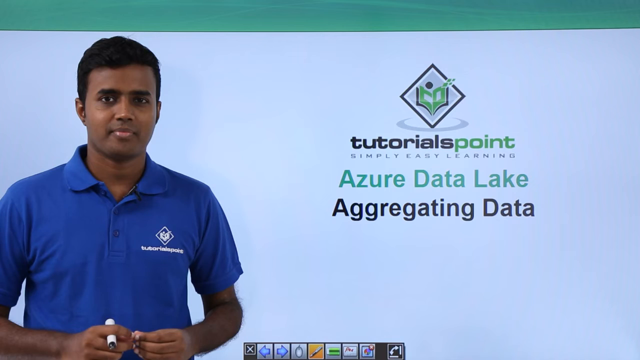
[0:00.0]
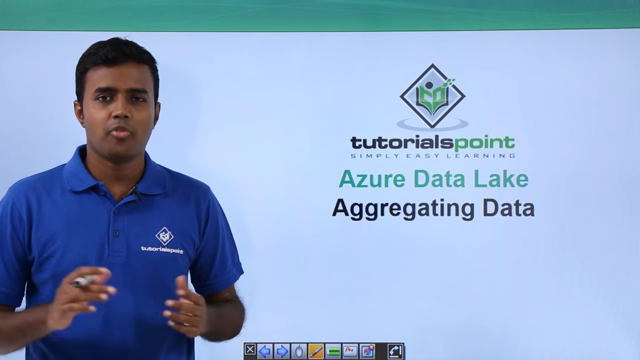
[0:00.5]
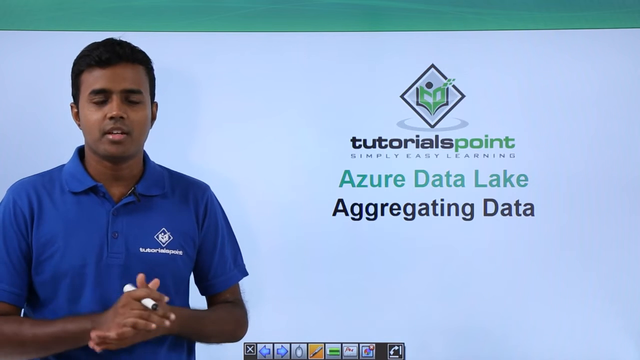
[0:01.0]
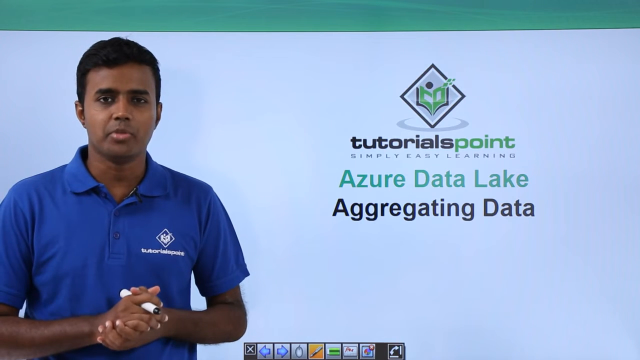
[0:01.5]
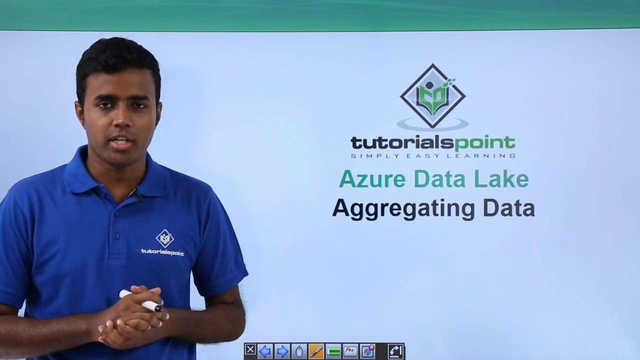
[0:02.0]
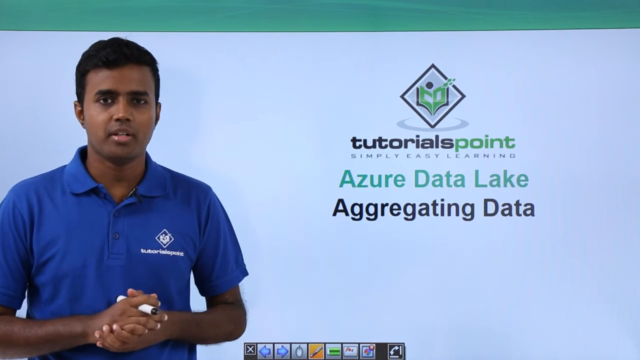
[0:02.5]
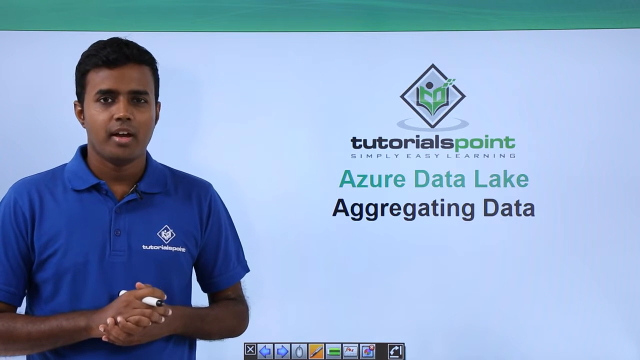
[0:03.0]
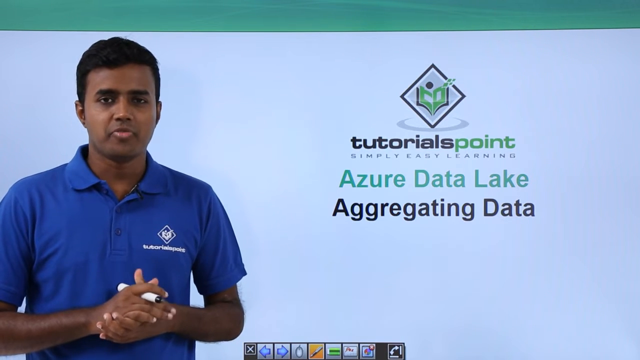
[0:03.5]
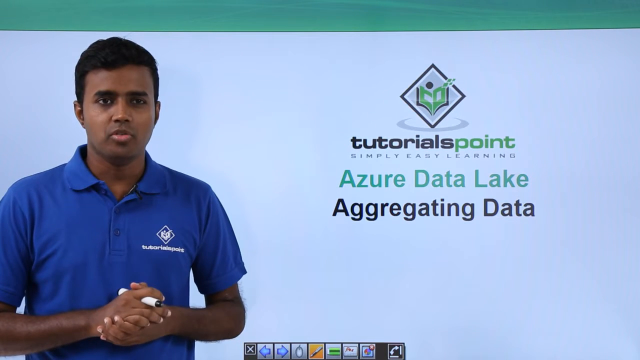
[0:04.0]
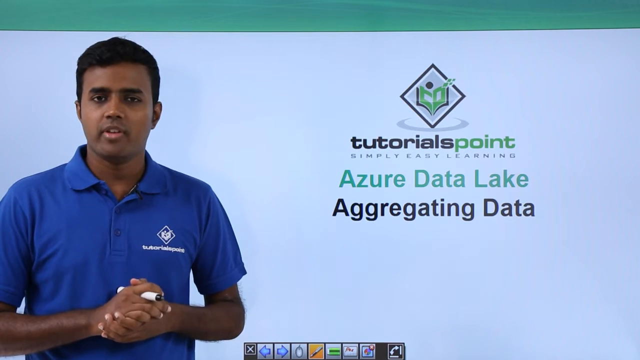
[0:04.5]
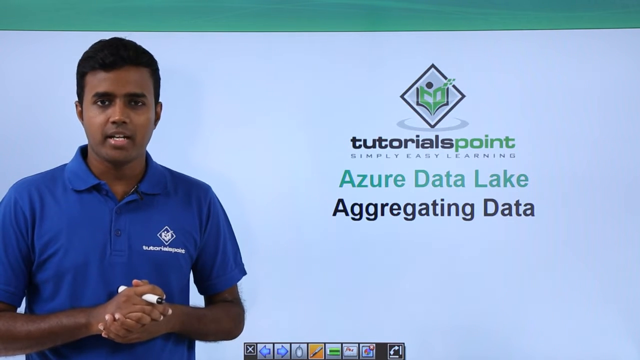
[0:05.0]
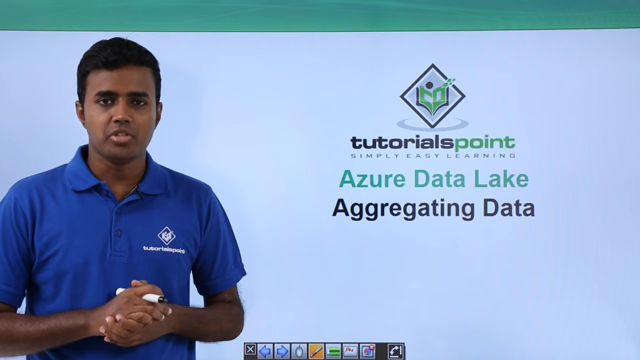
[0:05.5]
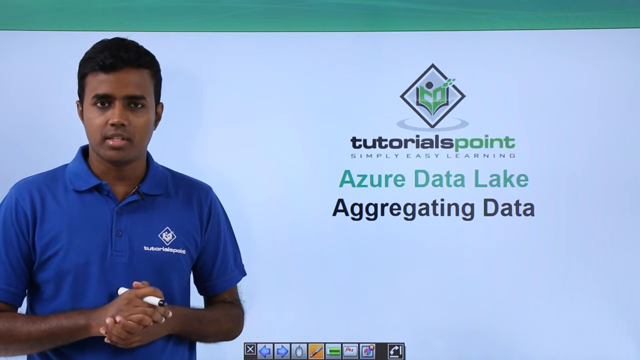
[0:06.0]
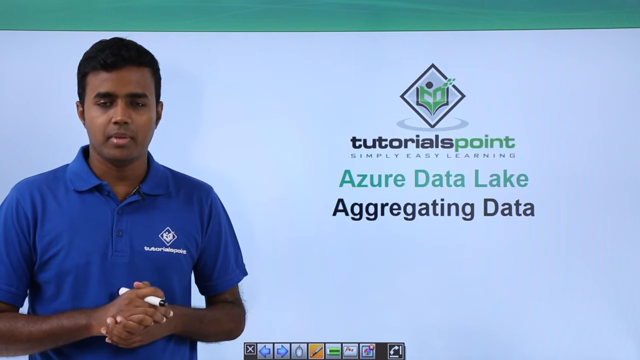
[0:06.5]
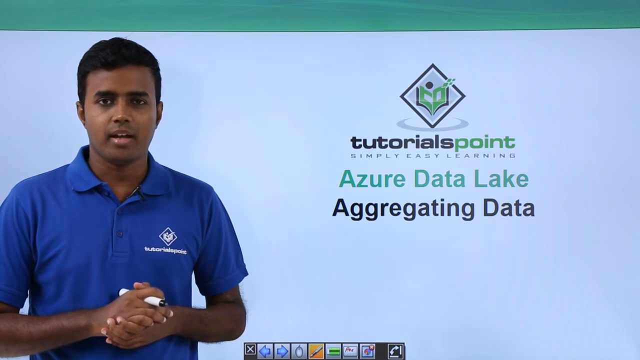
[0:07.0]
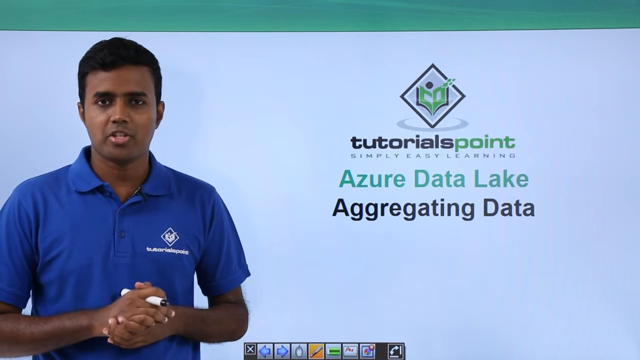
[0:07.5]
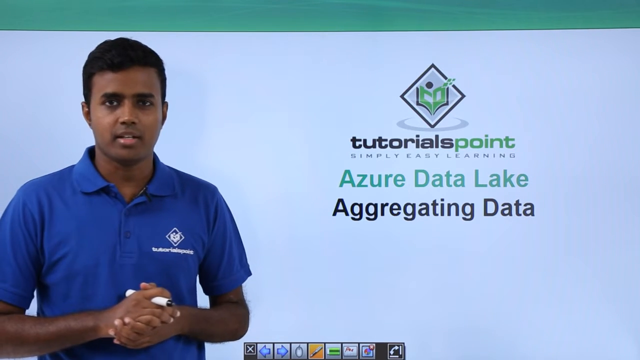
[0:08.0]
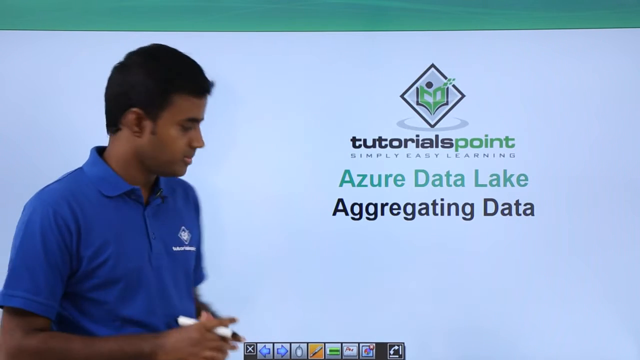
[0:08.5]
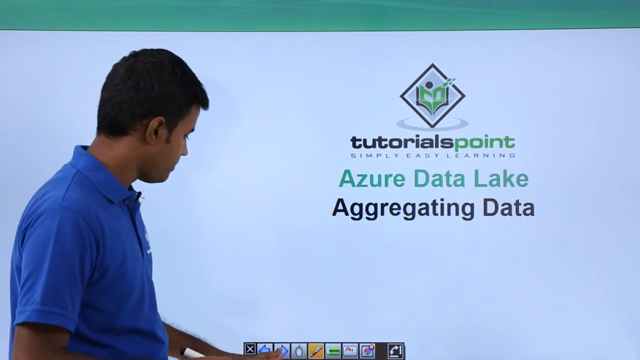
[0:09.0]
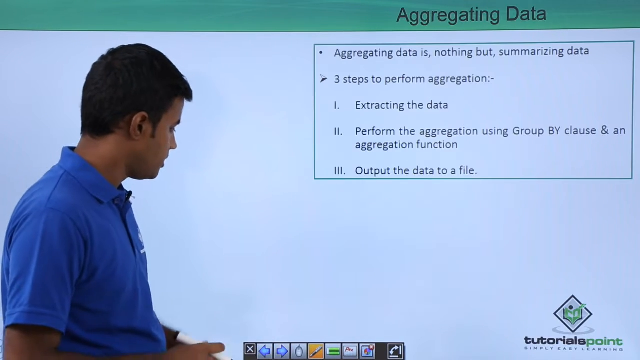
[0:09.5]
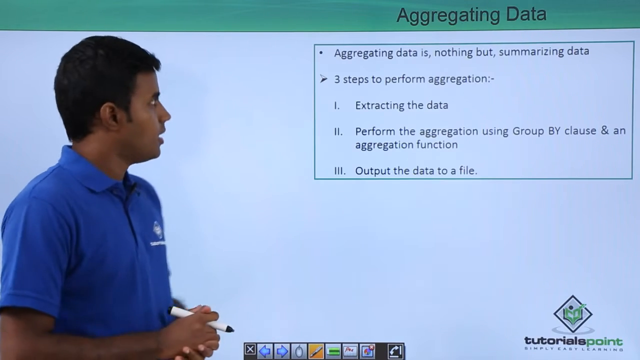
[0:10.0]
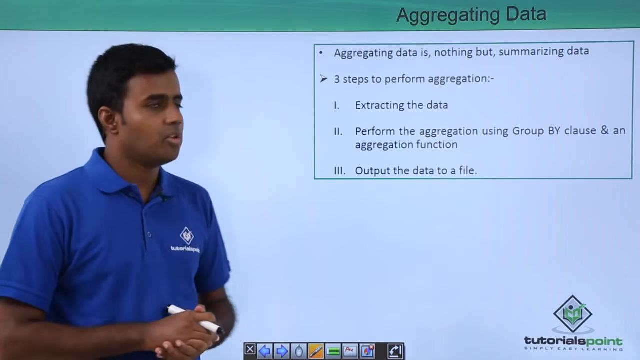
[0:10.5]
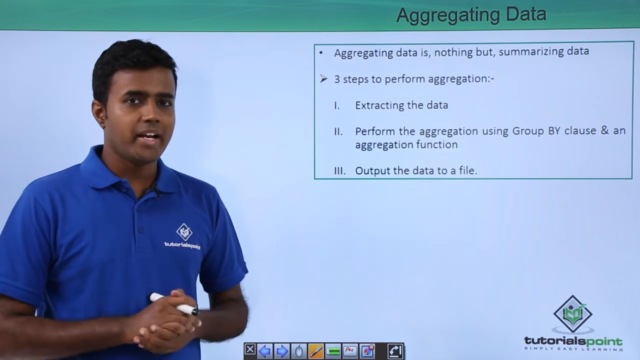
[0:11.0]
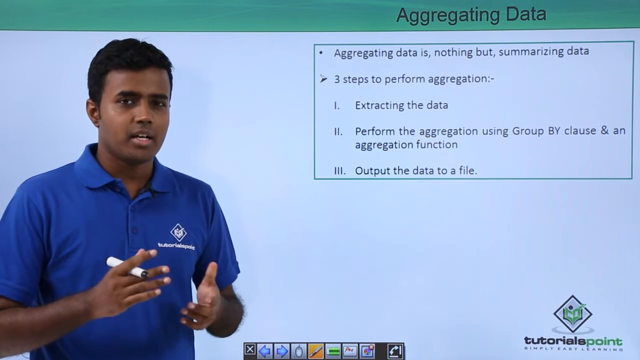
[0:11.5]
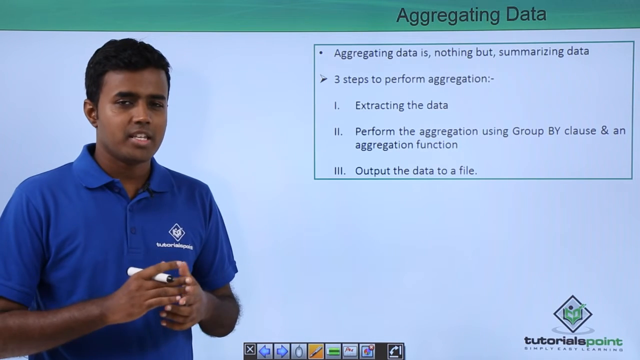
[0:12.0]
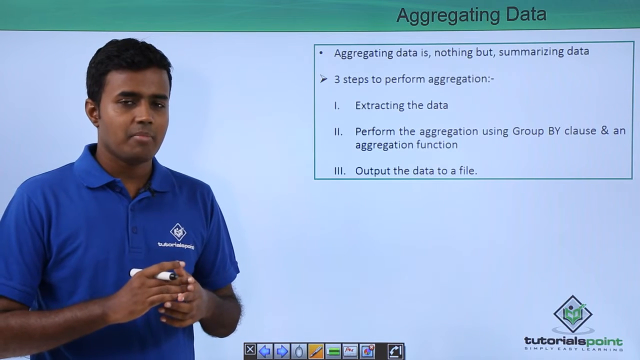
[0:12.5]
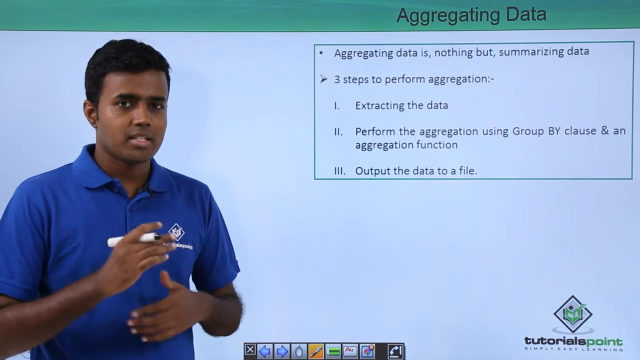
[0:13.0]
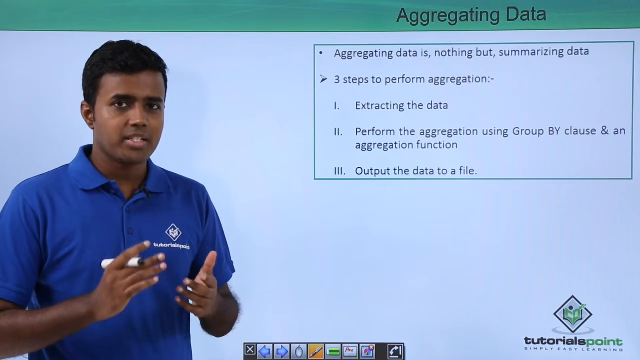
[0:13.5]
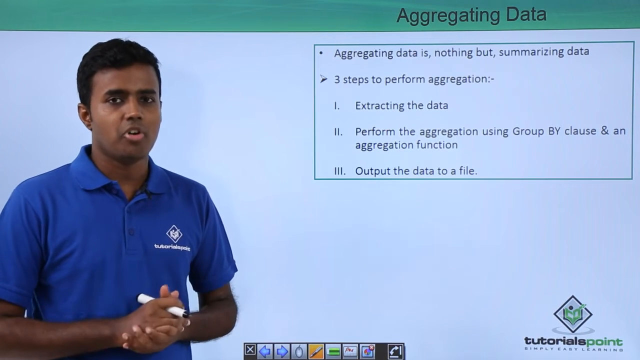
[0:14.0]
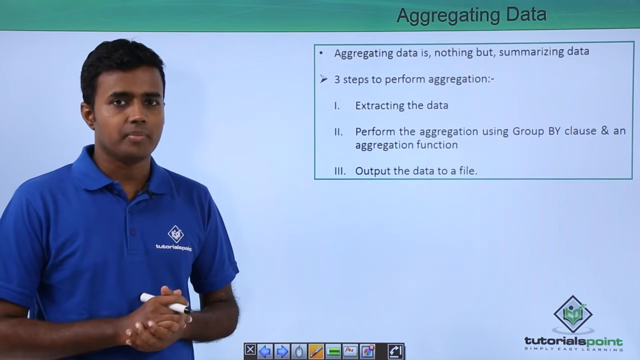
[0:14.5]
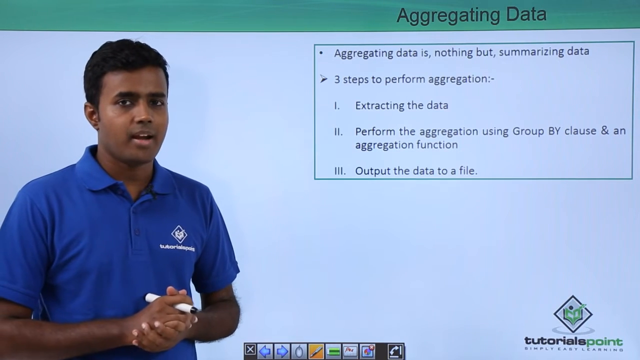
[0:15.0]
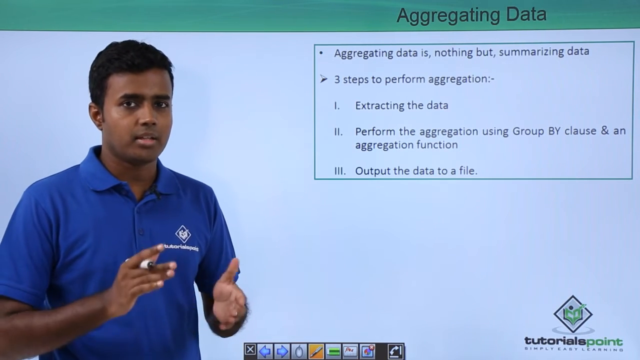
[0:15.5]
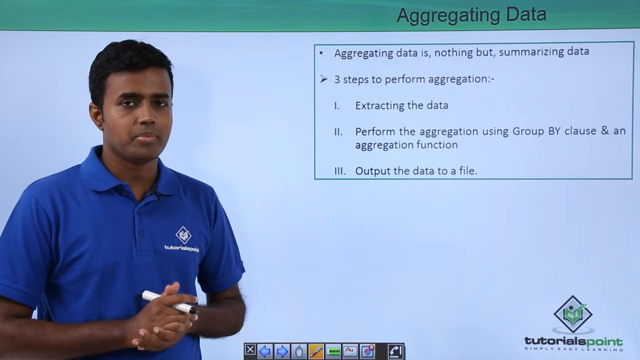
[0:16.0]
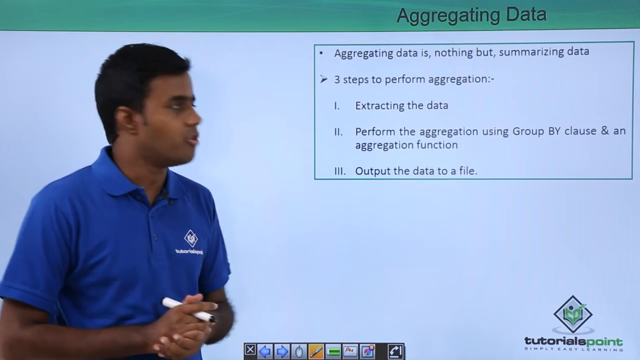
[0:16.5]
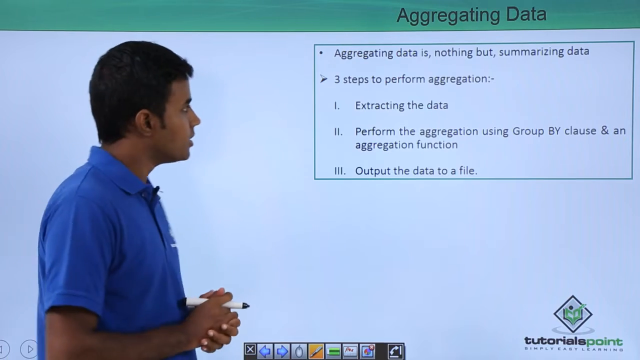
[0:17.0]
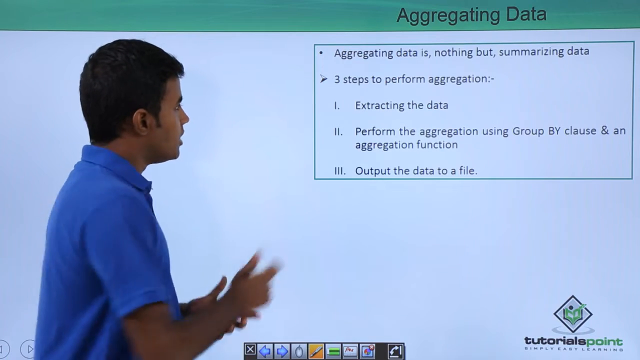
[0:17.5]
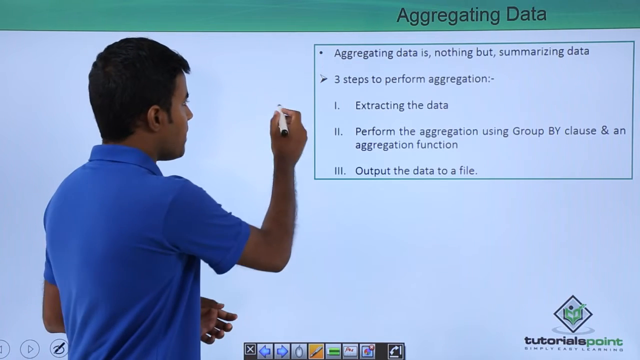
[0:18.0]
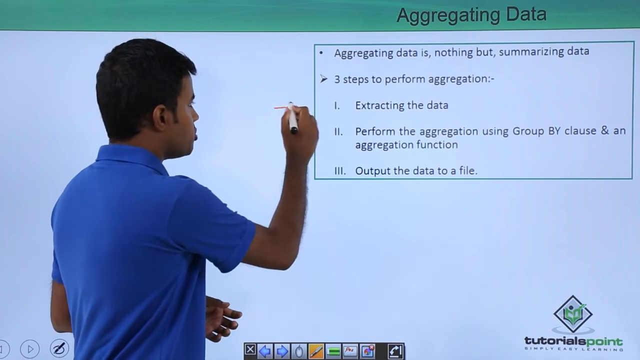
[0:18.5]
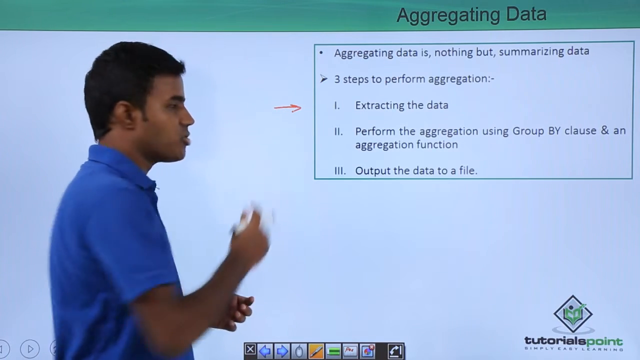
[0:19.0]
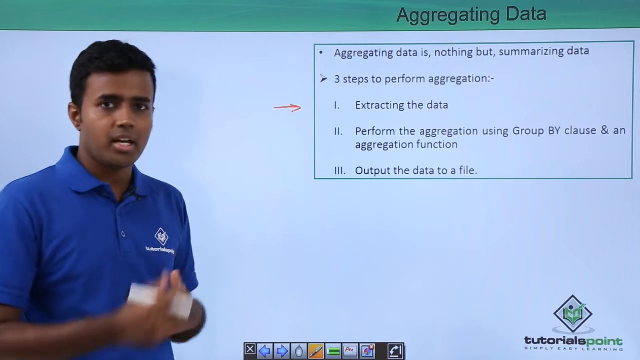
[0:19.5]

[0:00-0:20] A young man, perhaps in his mid-twenties, stands on the left side of the frame, seen from the waist up, wearing a dark blue polo shirt with a white logo. To the right of his head, on the right side of the screen, is a diamond-shaped box containing an illustrated open book in green and black. Below it reads "Tutorials Point, Simply Easy Learning." Beneath that, in larger teal or green text, it says "Azure Data Lake," followed in black text by "Aggregating Data." The man stands with a friendly look, his hands showing, holding a marker in his right hand. He turns toward the screen and presses a button, and suddenly a green banner reading "Aggregating Data" appears at the top while he speaks. Below it, a box reads "Aggregating Data is nothing but summarizing data," and below that are three steps to perform aggregation.